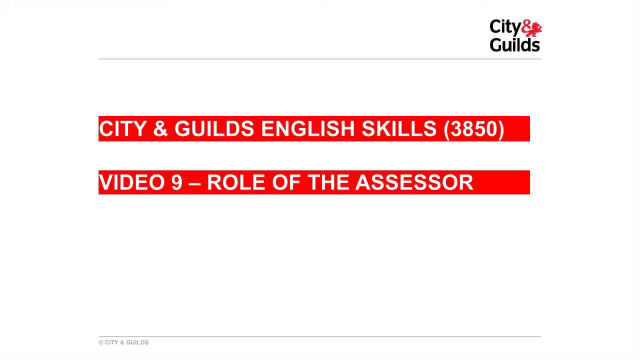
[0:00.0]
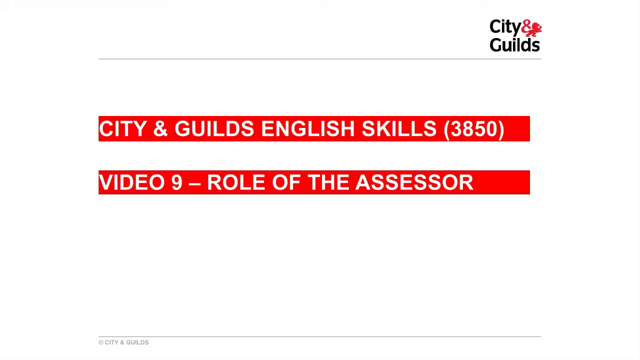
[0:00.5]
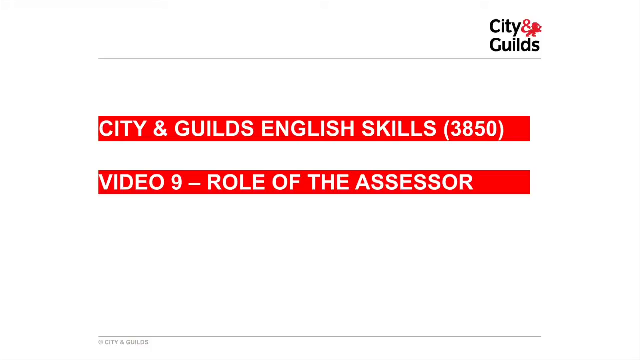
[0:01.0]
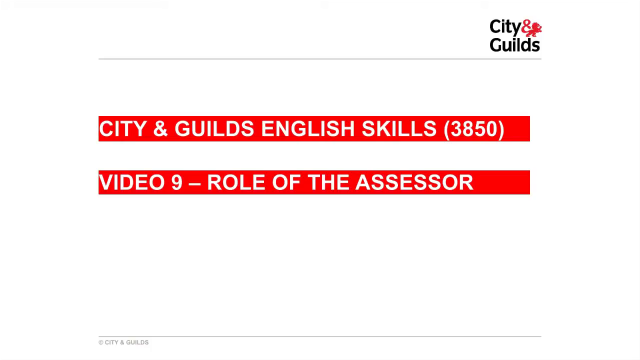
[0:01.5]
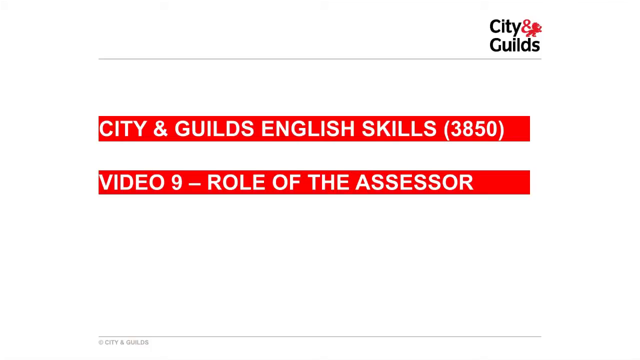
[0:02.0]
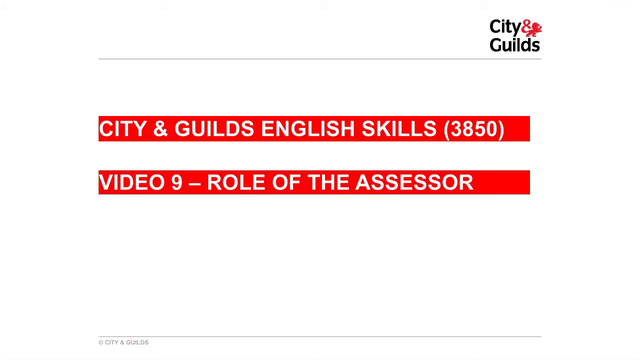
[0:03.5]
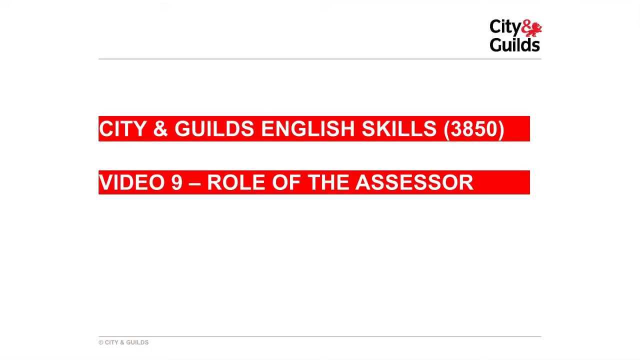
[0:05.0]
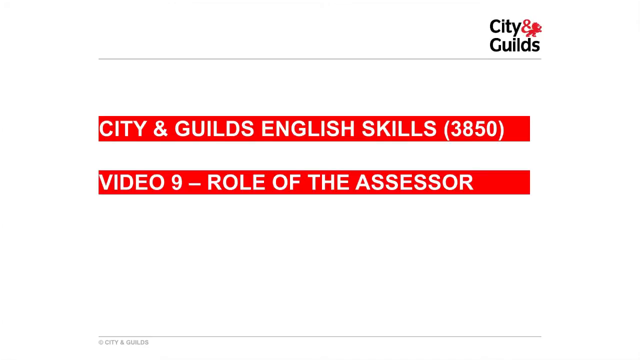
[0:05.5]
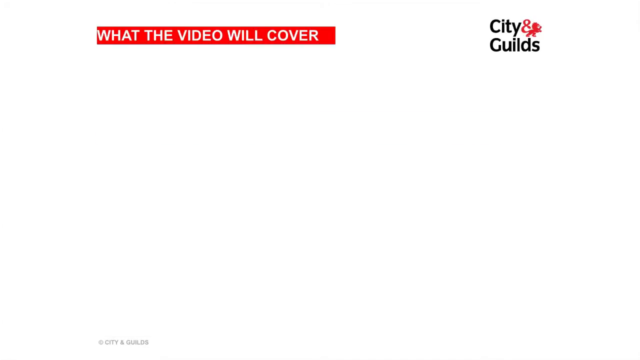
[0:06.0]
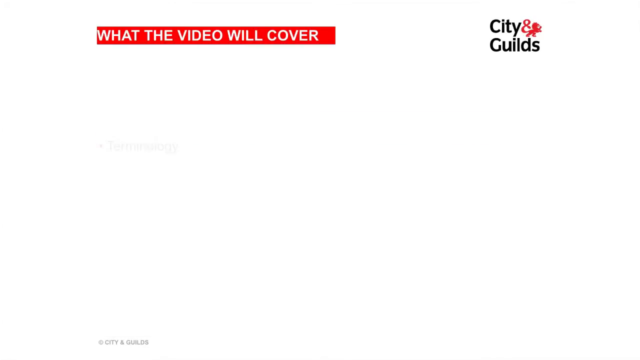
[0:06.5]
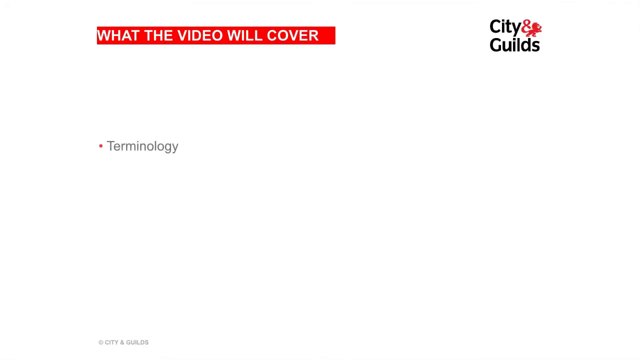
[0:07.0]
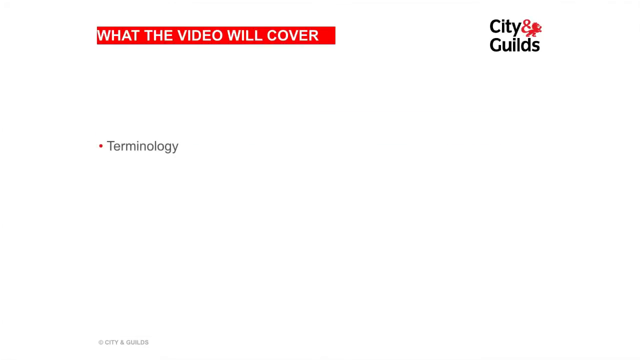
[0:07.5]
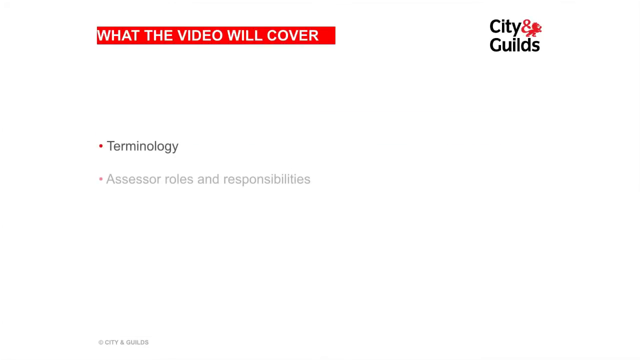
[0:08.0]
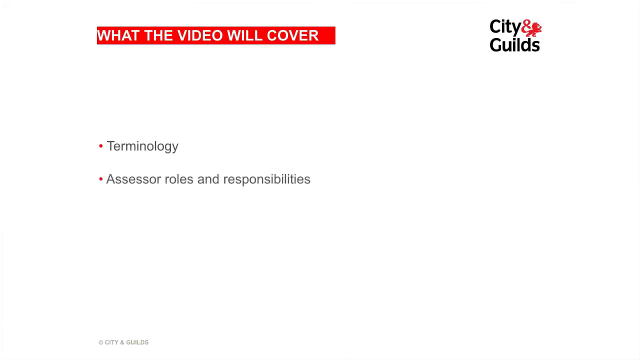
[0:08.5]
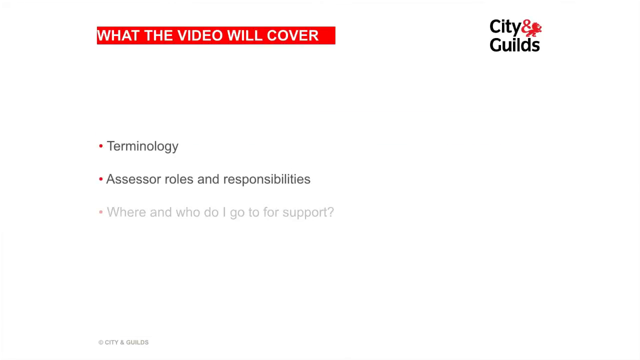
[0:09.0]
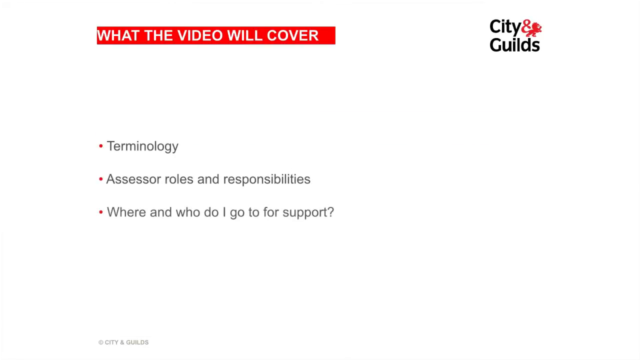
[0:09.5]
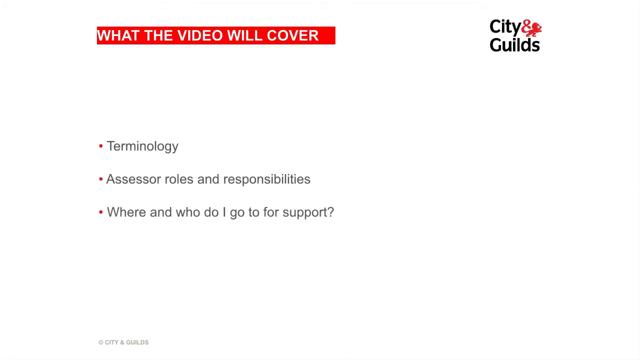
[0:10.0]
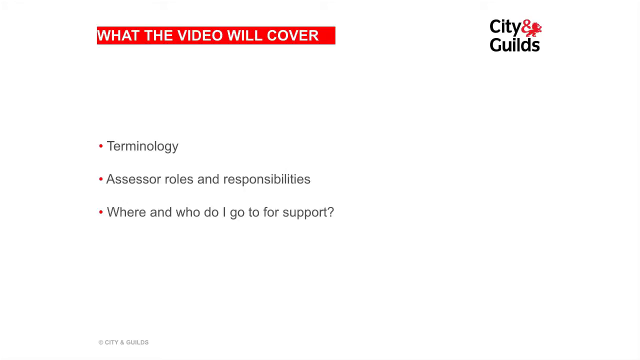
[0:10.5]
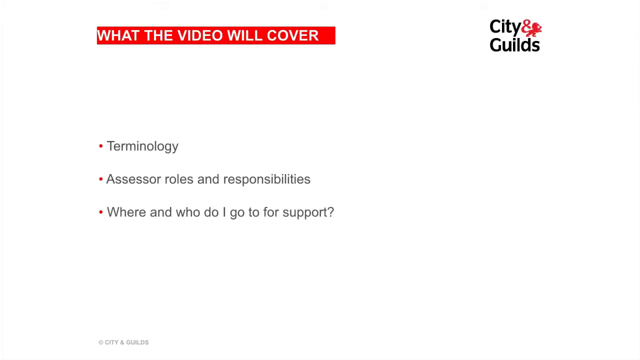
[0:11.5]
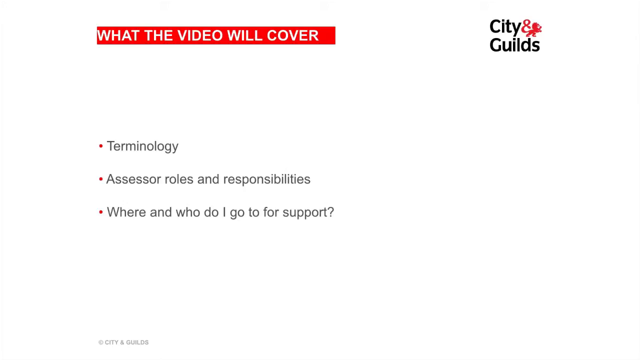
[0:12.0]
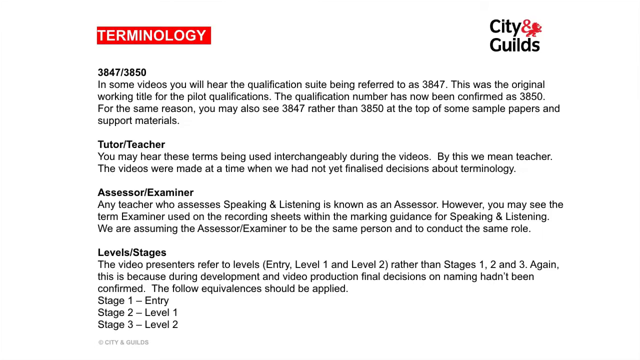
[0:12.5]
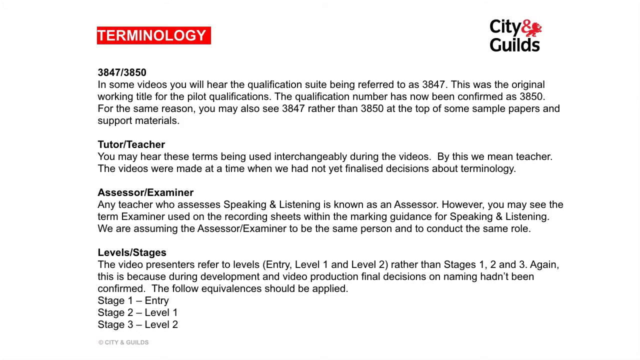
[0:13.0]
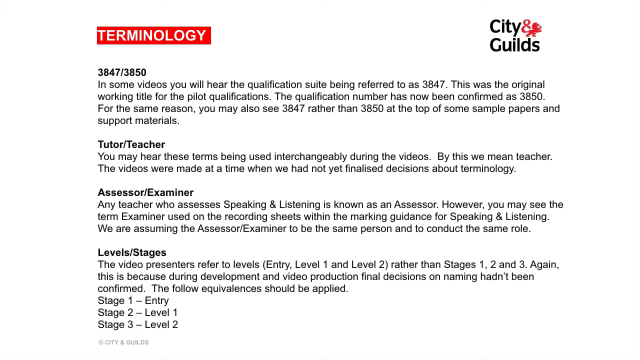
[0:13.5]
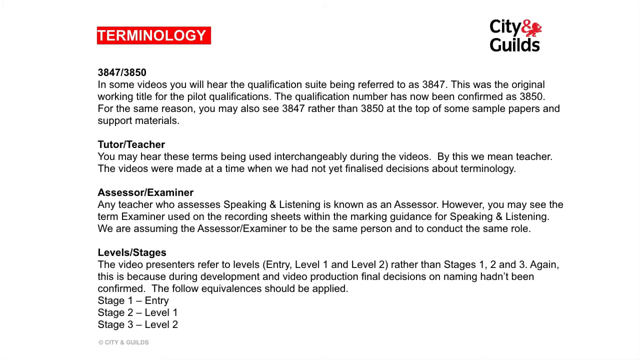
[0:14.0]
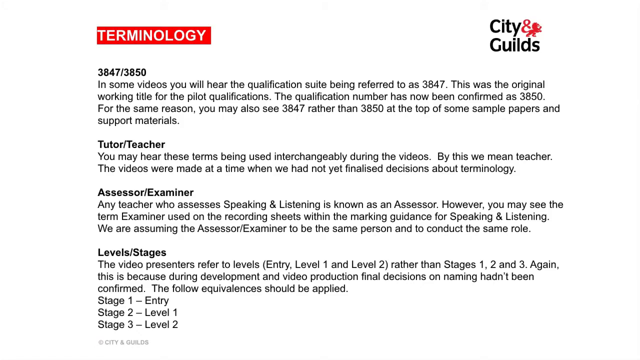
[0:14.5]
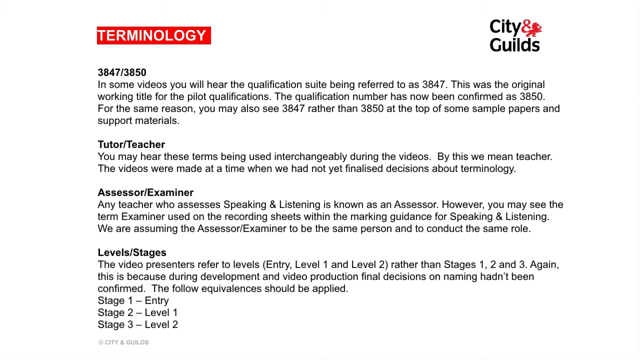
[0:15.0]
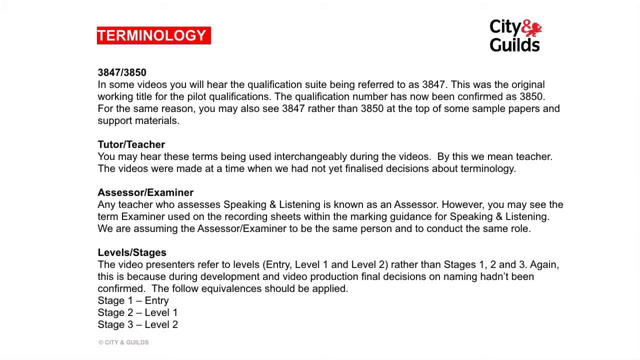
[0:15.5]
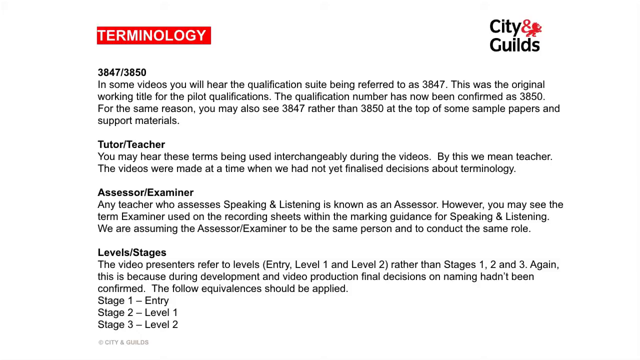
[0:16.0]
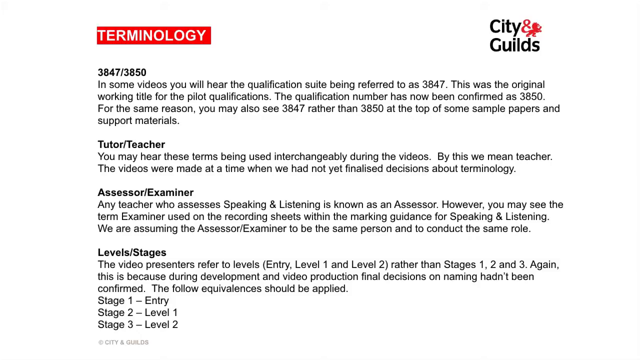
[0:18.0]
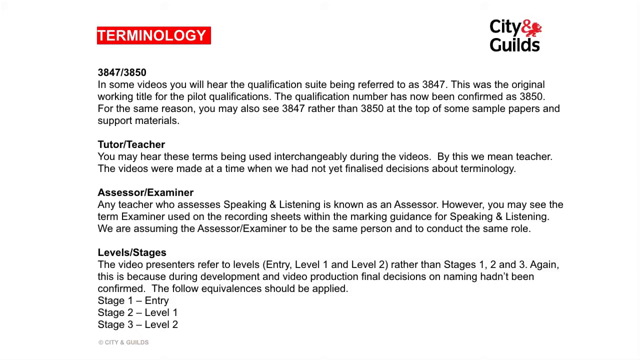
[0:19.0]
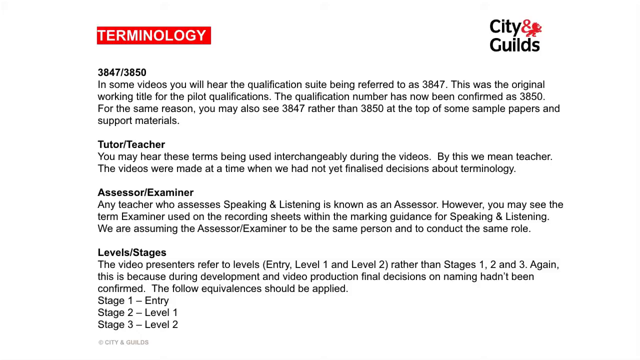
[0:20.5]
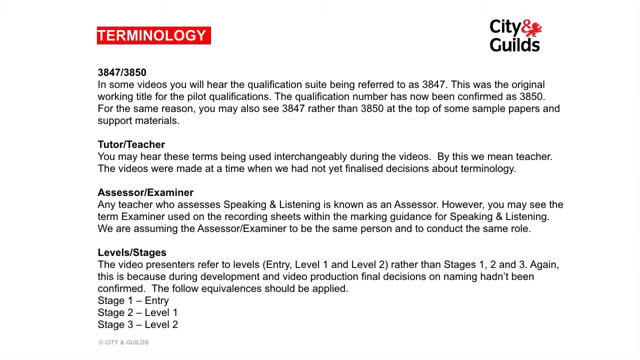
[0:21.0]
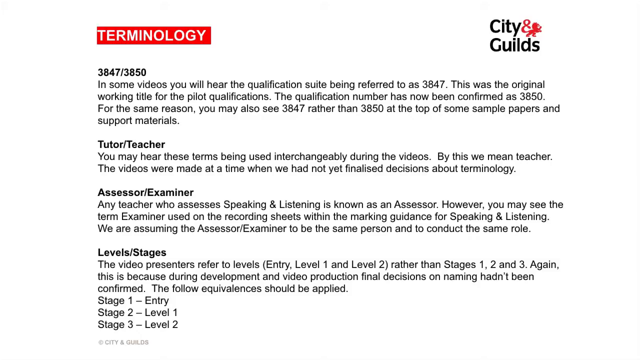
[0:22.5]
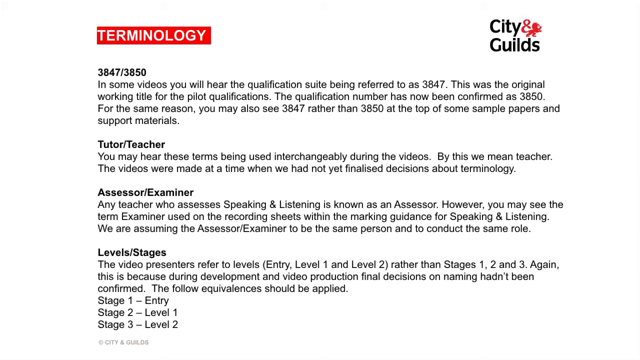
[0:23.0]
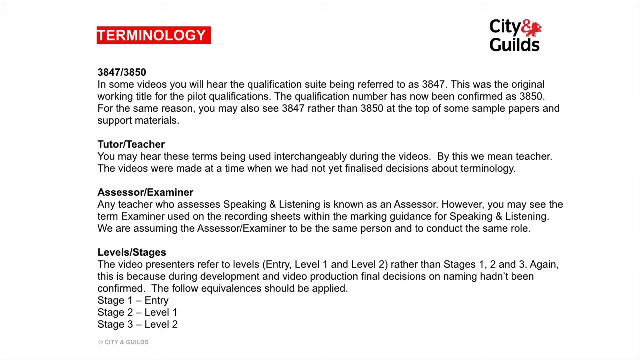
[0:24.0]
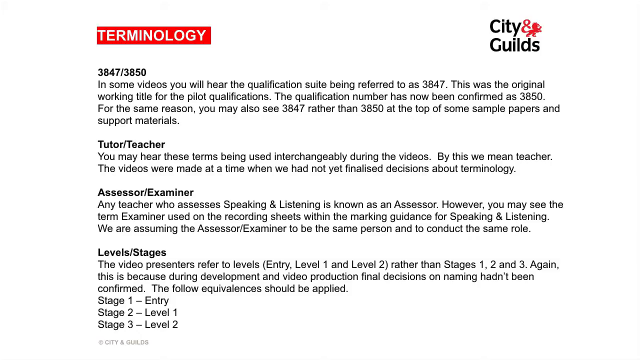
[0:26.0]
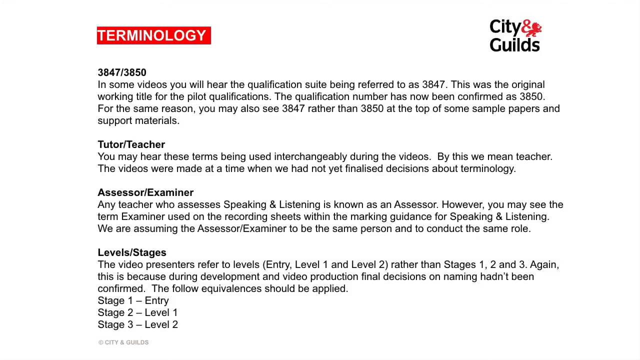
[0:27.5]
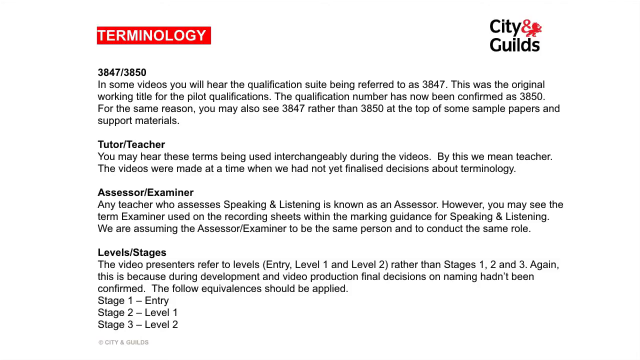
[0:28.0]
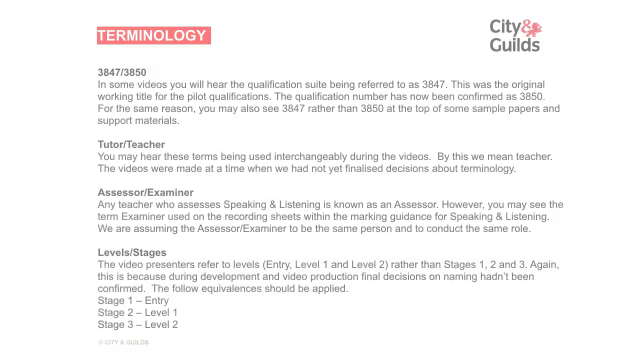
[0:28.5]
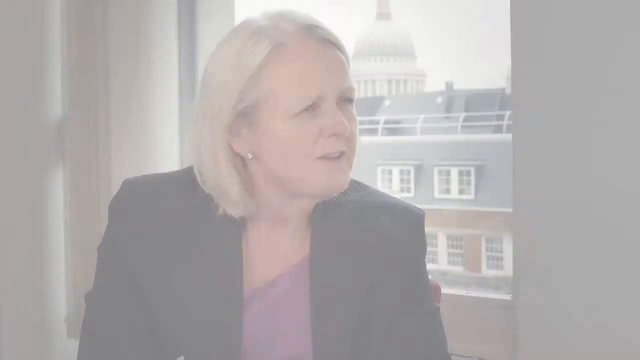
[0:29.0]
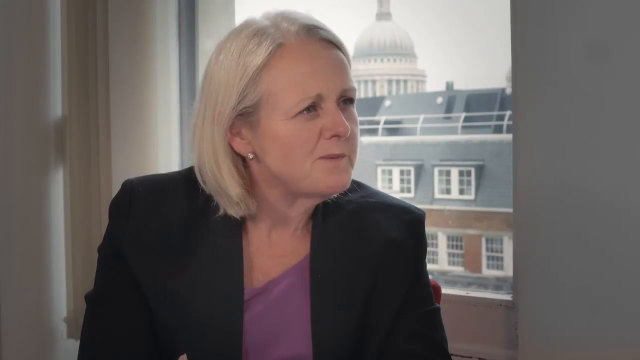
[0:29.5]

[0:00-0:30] The video begins with two red bars with white text in the middle of the screen. The first reads "City and Guilds English Skills" with "3850" in brackets, and the second red bar reads "Video 9, Role of the Assessor." The City and Guilds logo is at the top, and at the very bottom is "City and Guilds" with a small copyright symbol. A transition leads to the next slide, which states what the video will cover in a red bar; beneath it are "terminology," "assessor roles and responsibilities," and "where and who do I go to for support." The third slide covers terminology, giving definitions for the terms "3847/3850," "tutor/teacher," "assessor/examiner," and "levels/stages." "Terminology" also appears at the top left of the screen in a red box with white letters, and the City and Guilds logo remains at the top right.